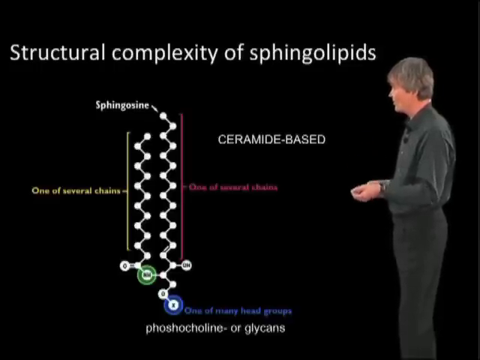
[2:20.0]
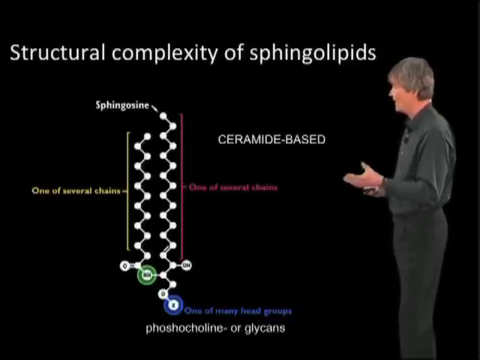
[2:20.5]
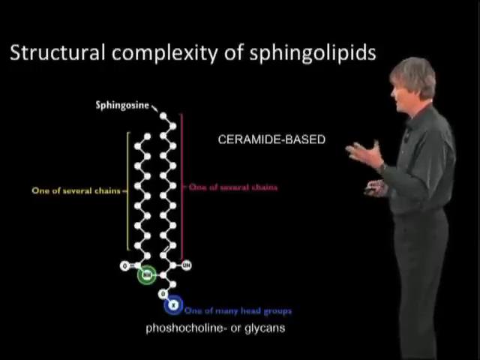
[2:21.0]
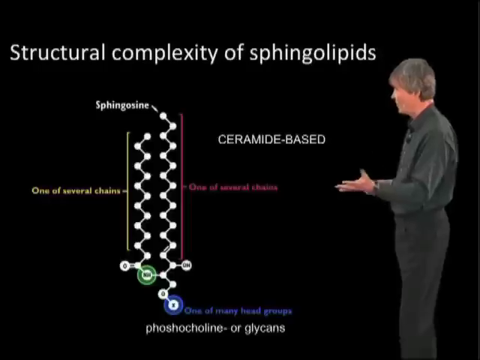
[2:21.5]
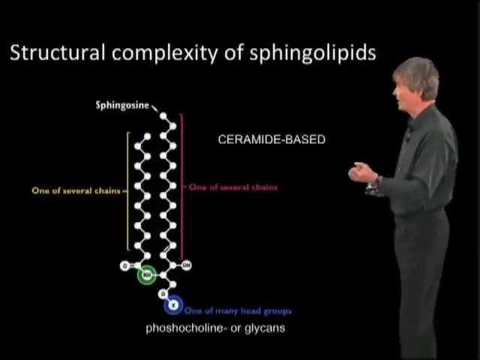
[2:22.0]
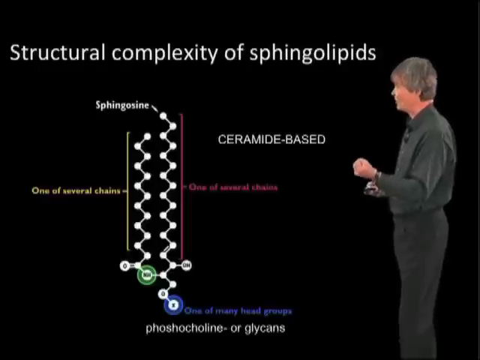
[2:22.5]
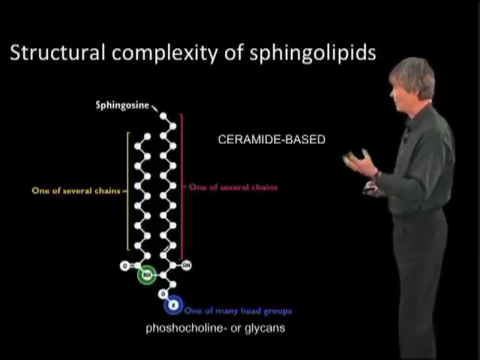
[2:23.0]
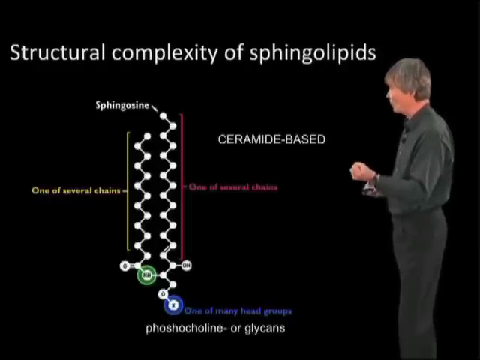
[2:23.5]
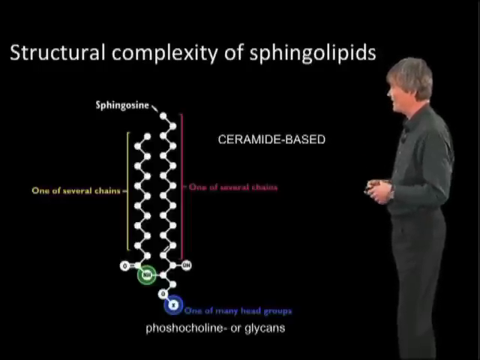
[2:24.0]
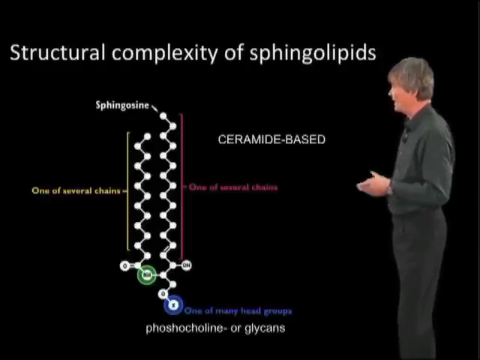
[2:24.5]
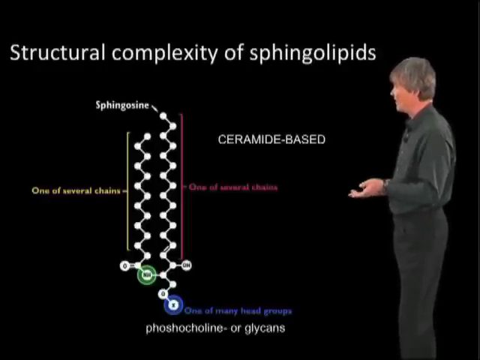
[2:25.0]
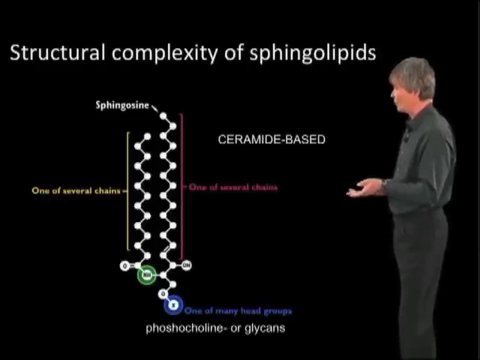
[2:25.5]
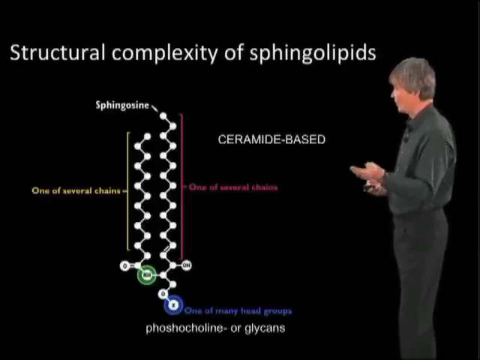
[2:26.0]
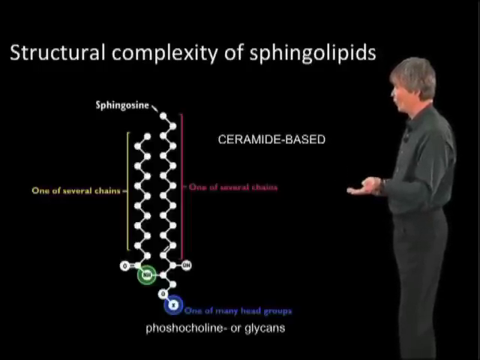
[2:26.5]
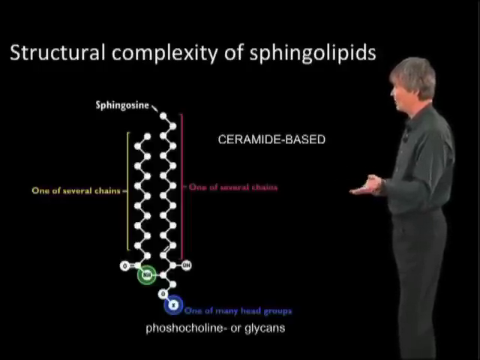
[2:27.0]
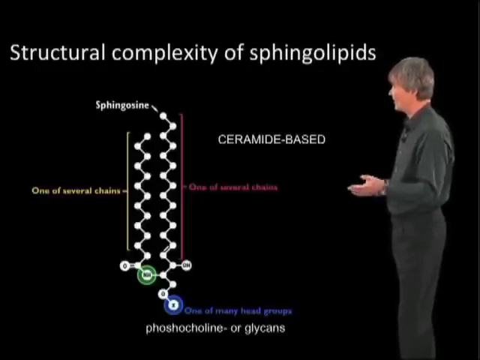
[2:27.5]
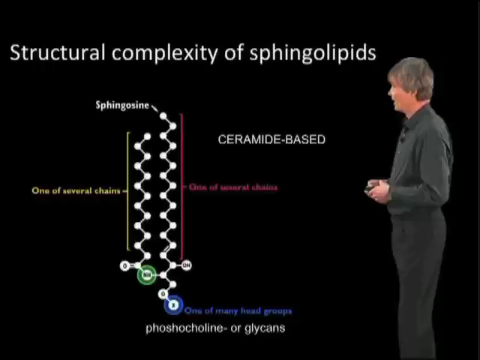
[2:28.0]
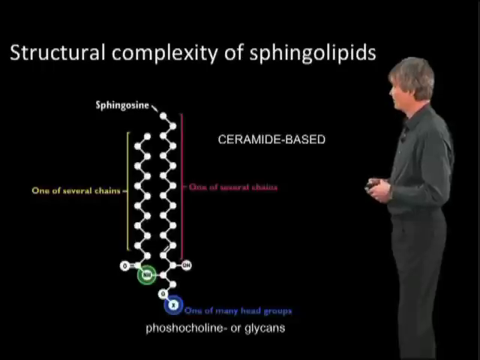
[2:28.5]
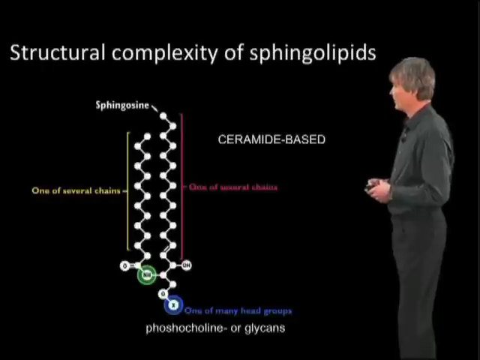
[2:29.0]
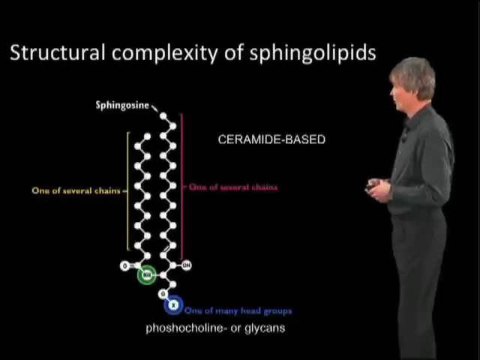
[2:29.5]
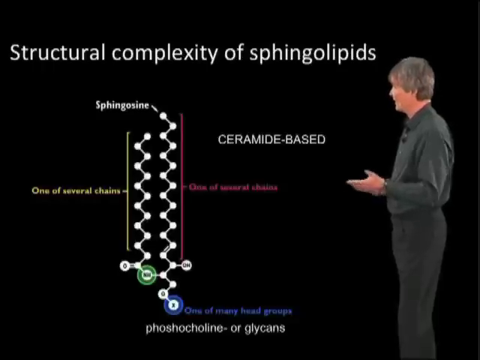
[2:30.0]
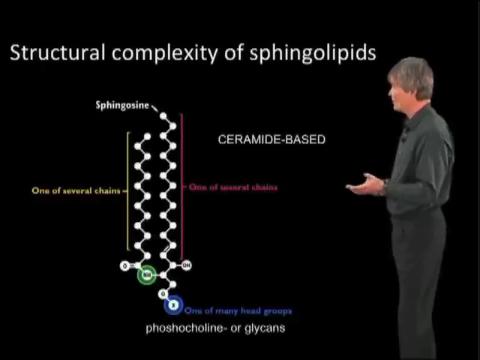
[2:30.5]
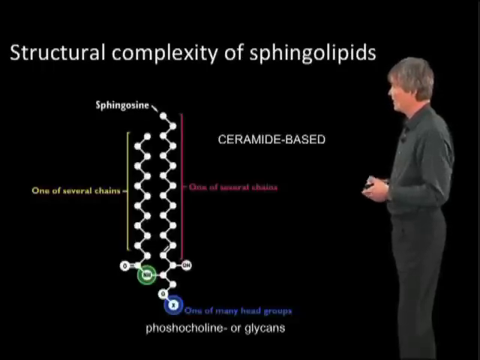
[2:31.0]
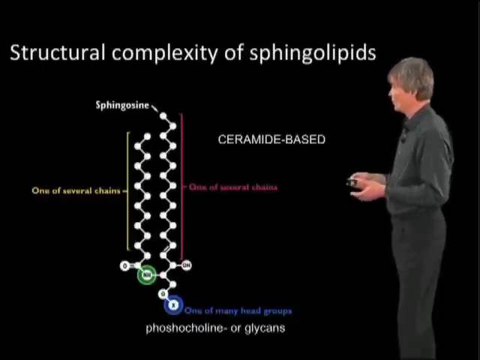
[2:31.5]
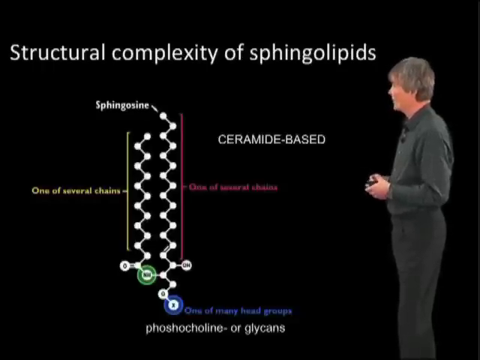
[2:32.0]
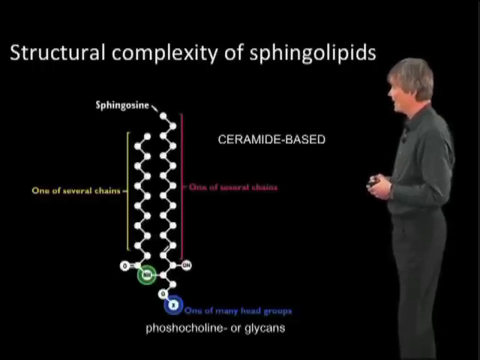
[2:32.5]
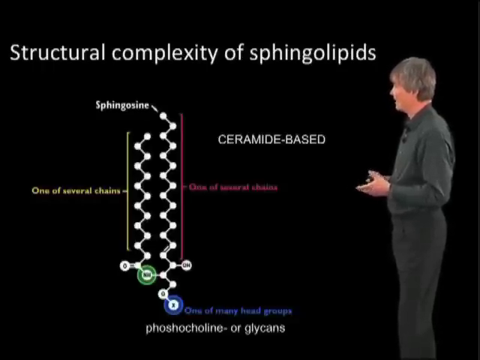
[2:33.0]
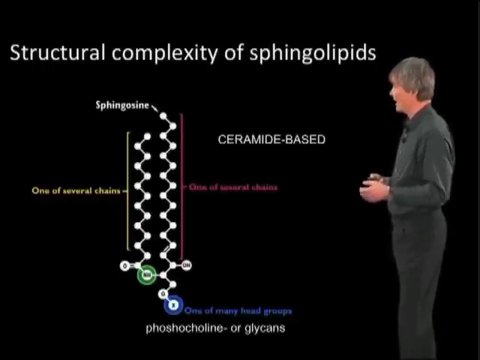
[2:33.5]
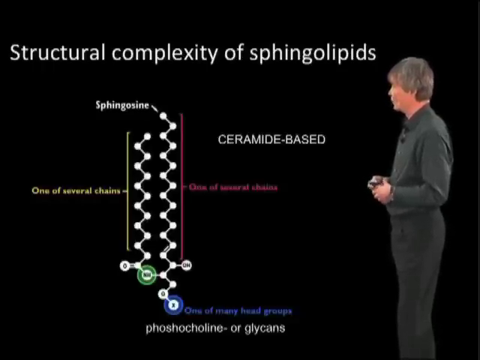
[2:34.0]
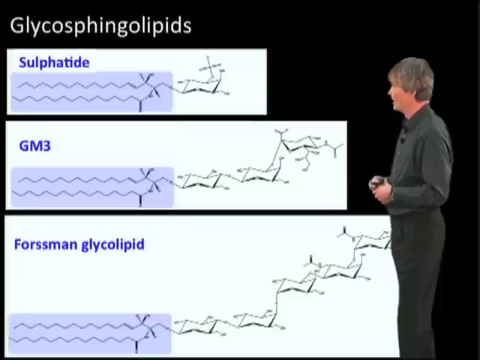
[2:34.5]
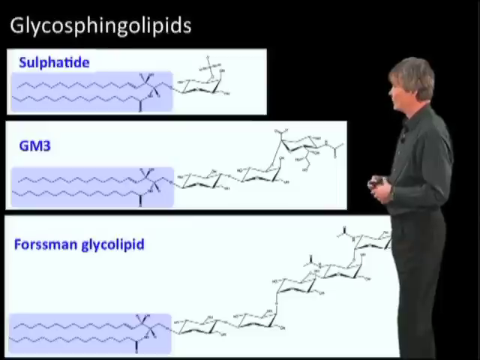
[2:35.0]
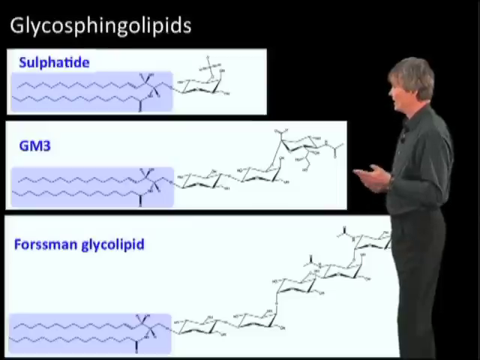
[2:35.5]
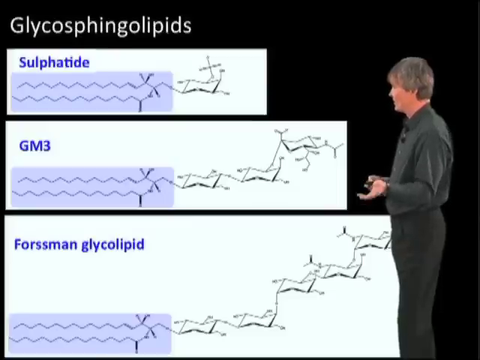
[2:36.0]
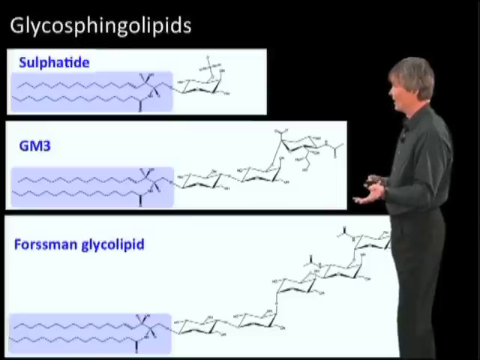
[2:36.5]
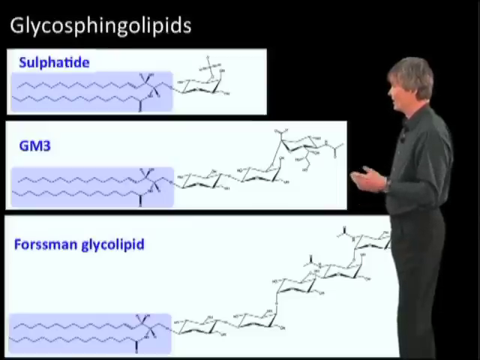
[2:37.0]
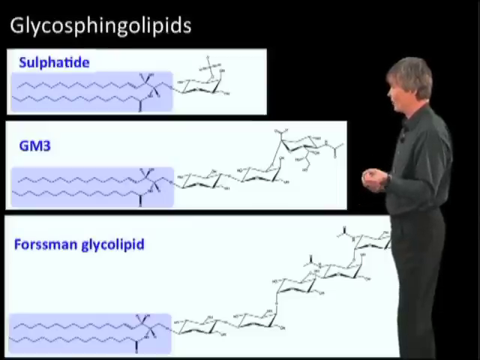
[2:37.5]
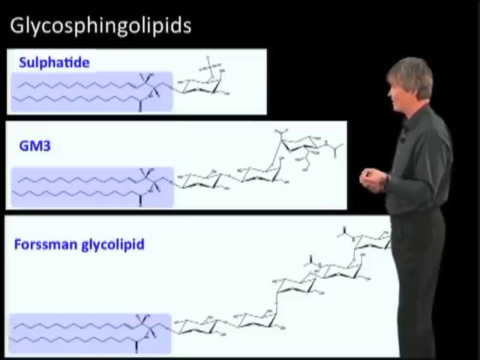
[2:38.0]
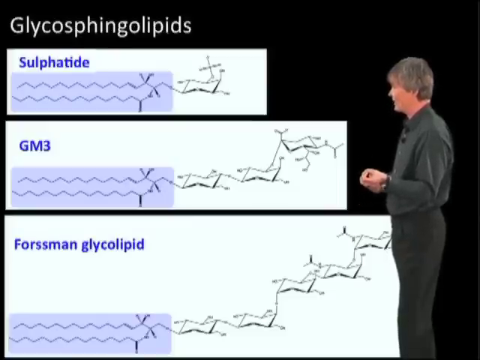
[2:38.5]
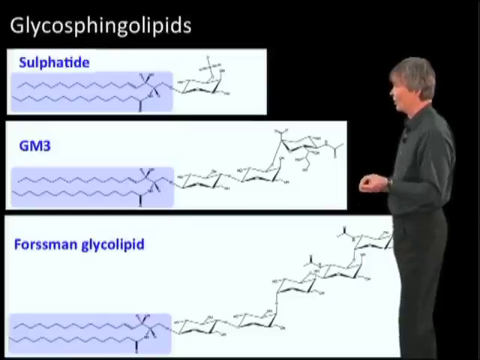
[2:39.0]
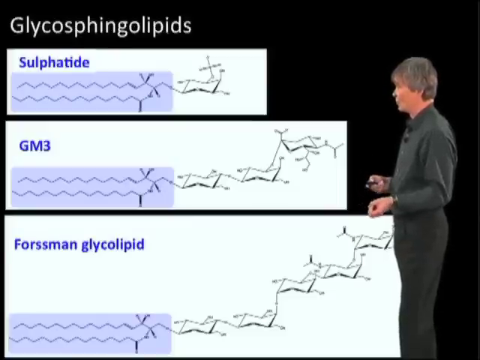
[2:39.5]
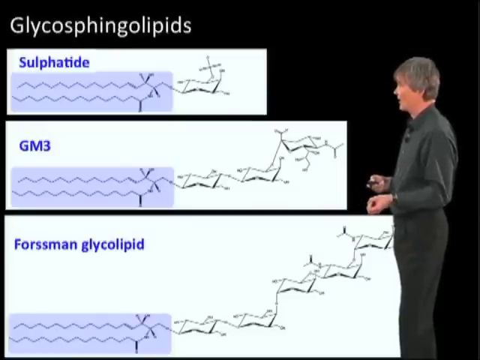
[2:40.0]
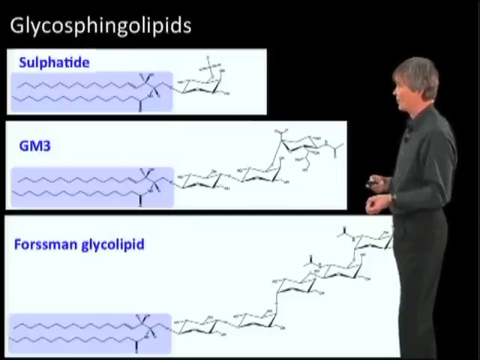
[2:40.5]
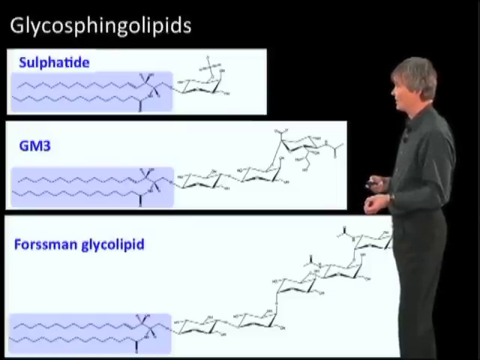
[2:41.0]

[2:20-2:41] The instructor looks at the 2D sphingolipid diagram, which includes the head of the lipid and its tail, indicates "one of several chains," and is ceramide based. The next diagram is of glycosphingolipids in three versions: a sulfatide, a GM3, with part of each skeletal formula highlighted in blue, and a Forsman glycolipid, with the tail shown for each one.